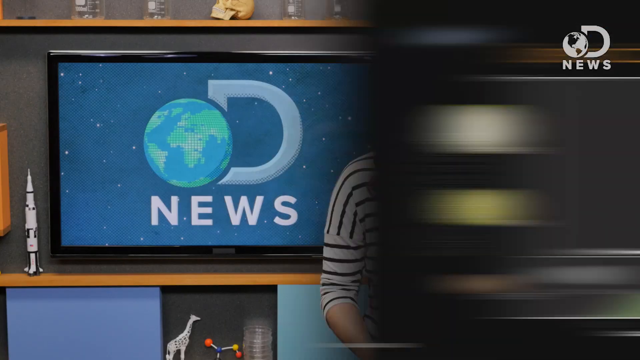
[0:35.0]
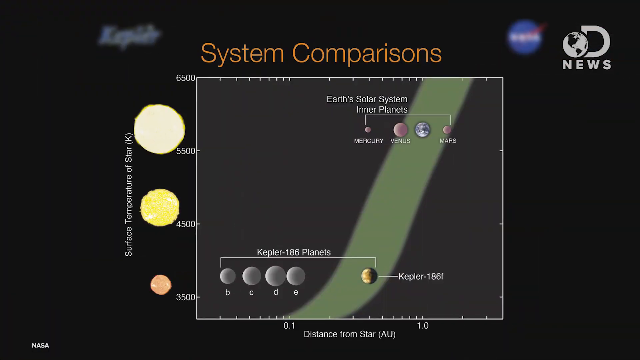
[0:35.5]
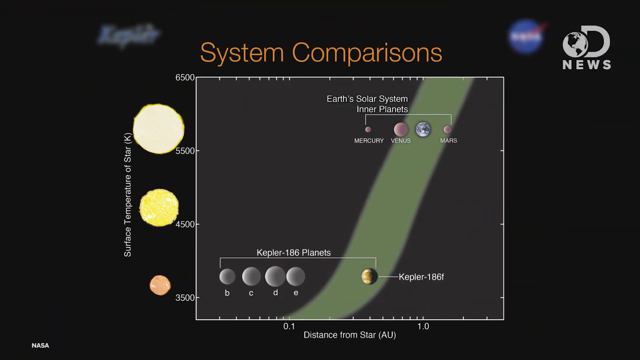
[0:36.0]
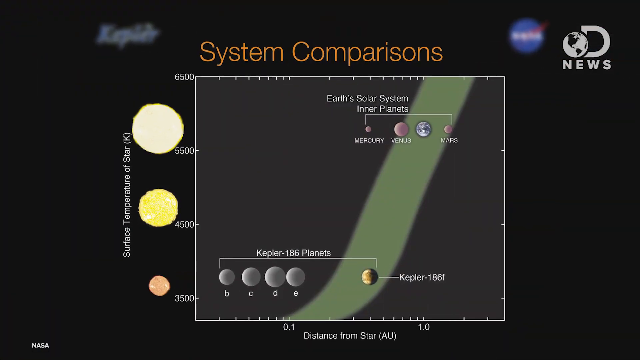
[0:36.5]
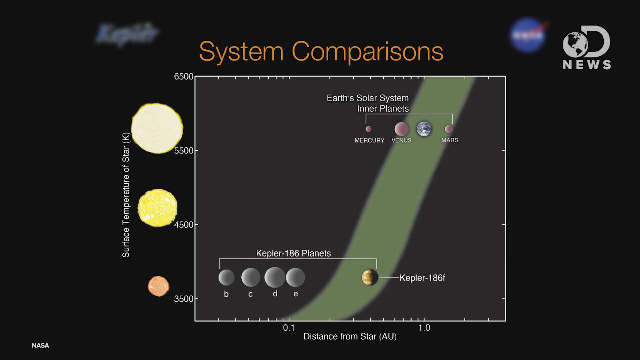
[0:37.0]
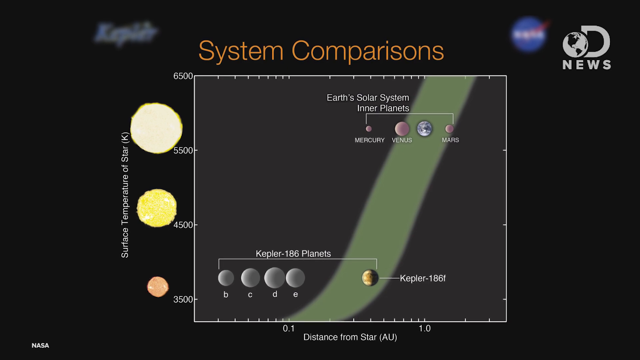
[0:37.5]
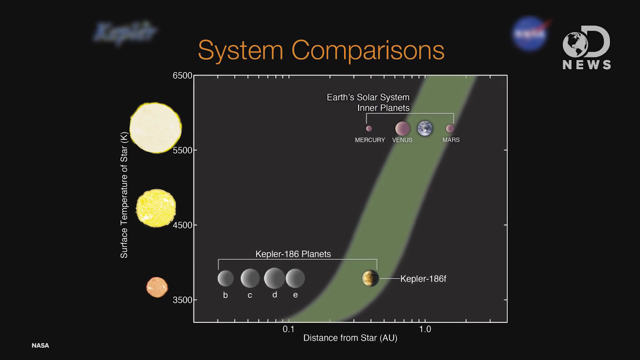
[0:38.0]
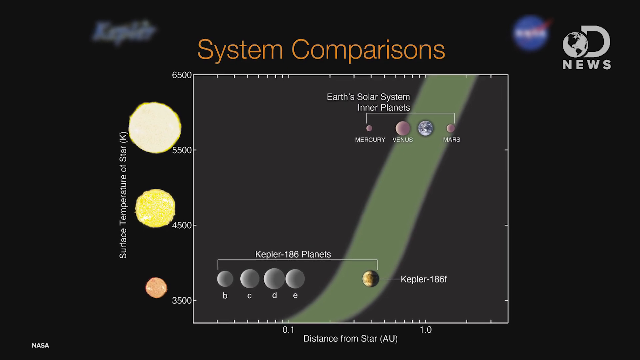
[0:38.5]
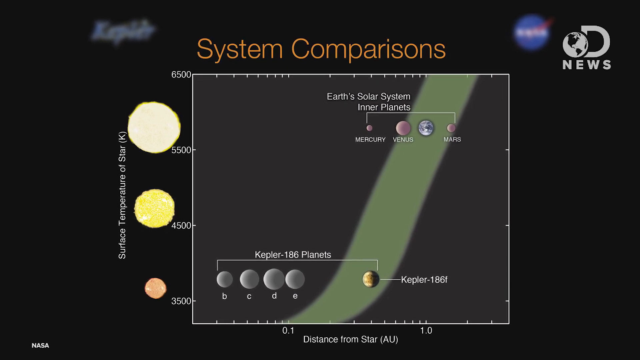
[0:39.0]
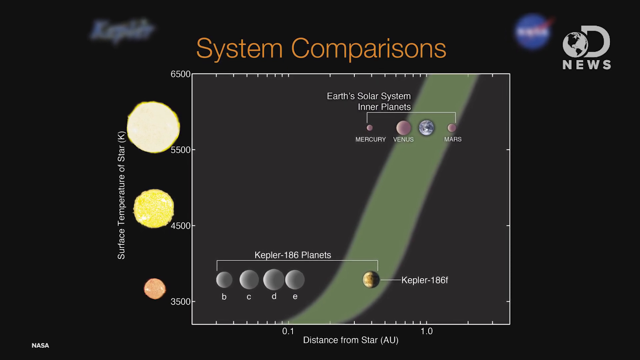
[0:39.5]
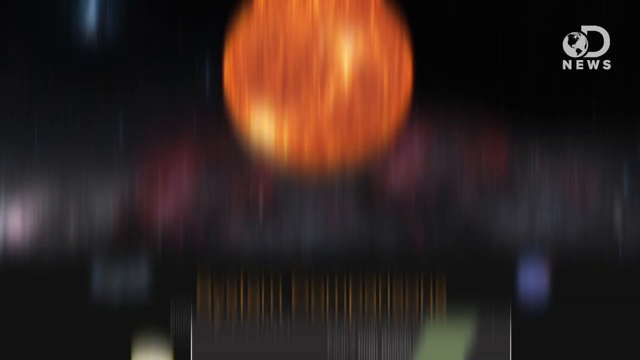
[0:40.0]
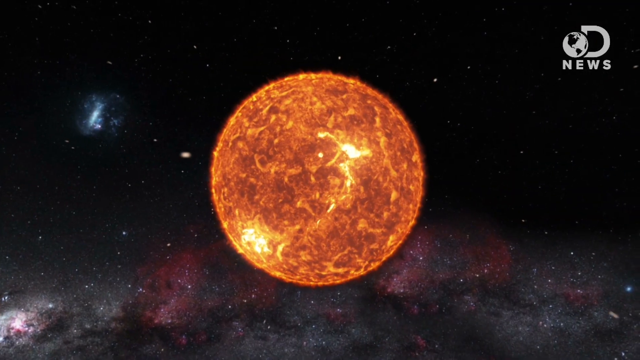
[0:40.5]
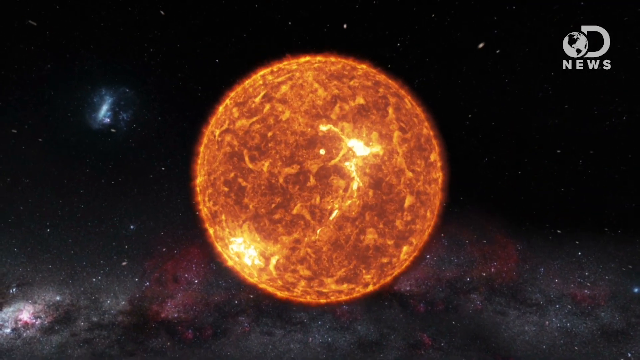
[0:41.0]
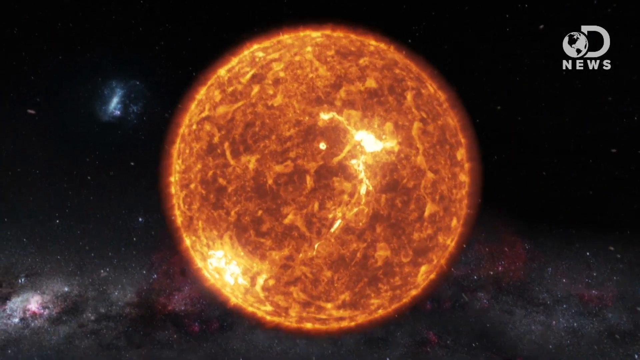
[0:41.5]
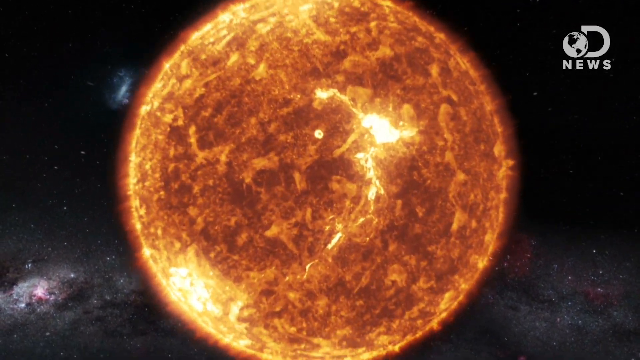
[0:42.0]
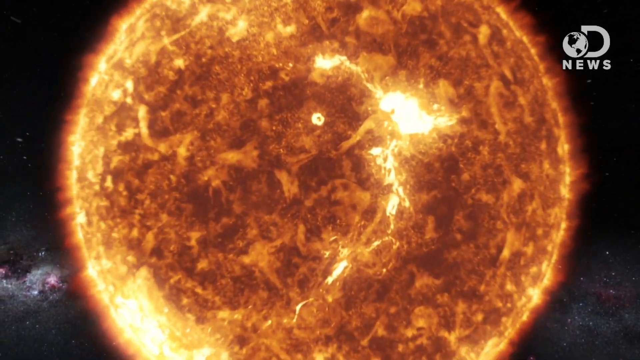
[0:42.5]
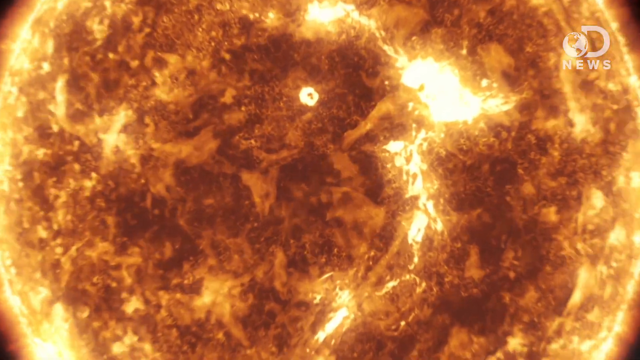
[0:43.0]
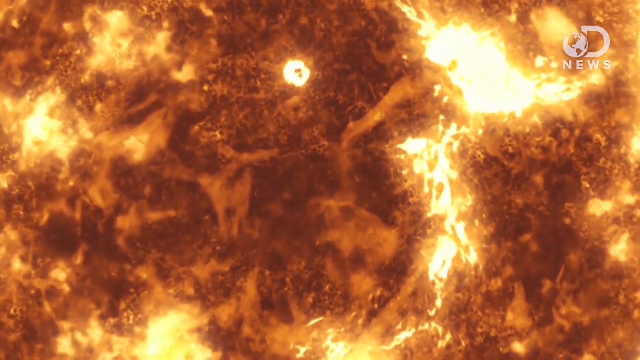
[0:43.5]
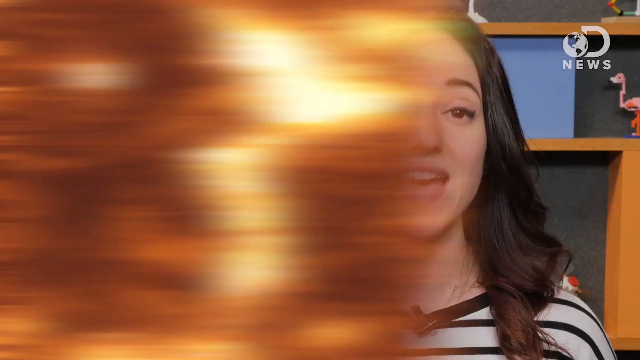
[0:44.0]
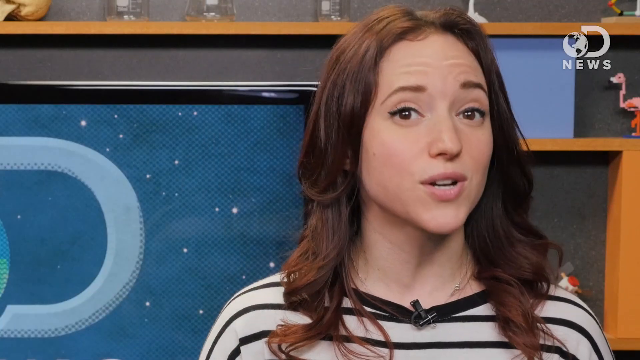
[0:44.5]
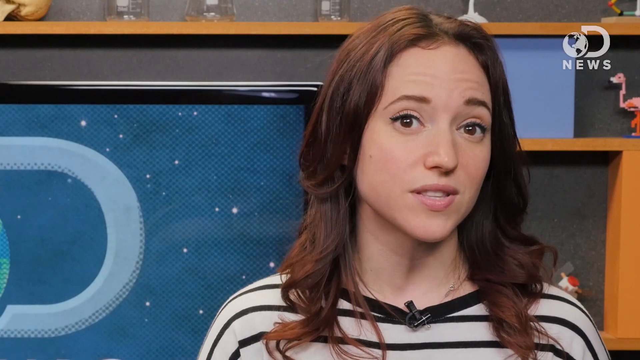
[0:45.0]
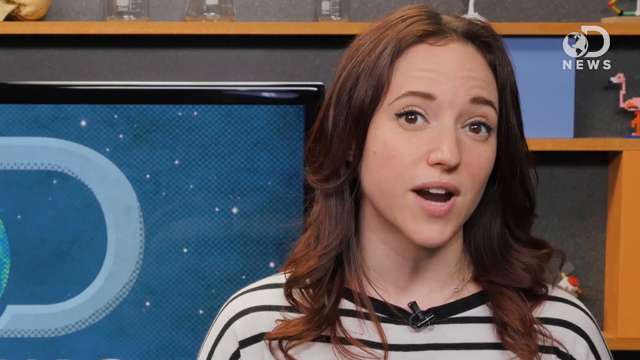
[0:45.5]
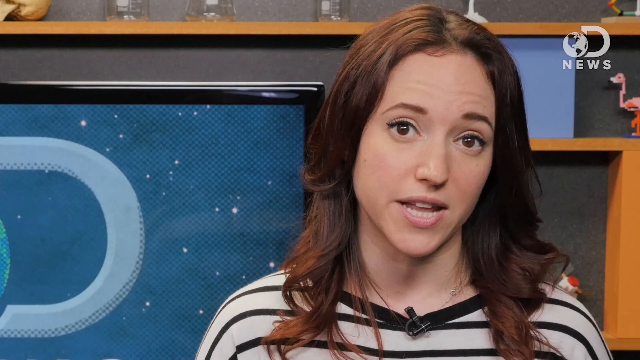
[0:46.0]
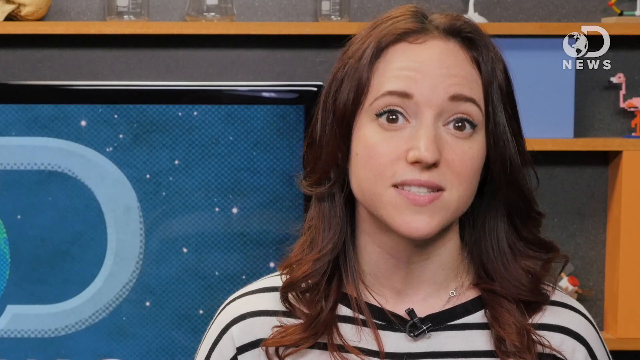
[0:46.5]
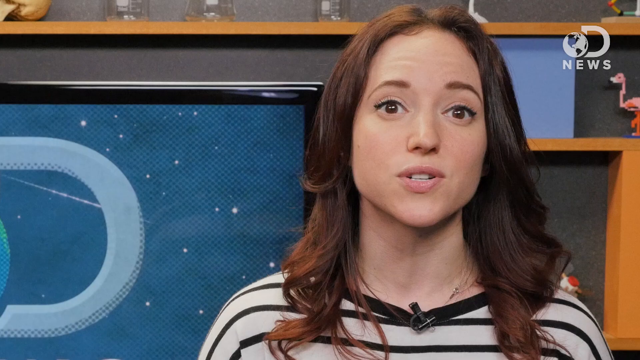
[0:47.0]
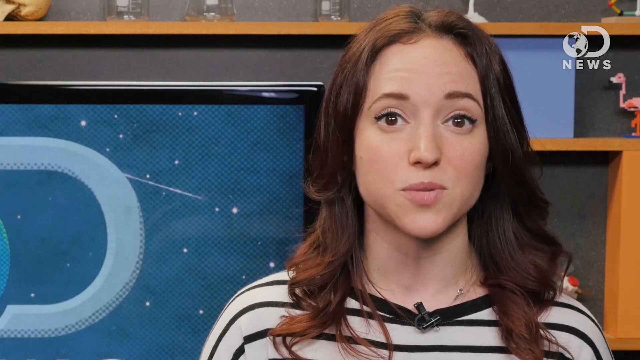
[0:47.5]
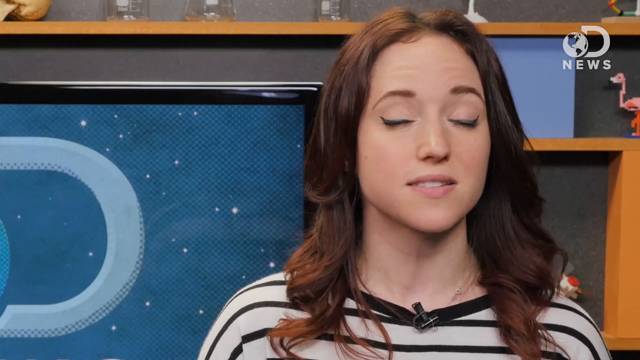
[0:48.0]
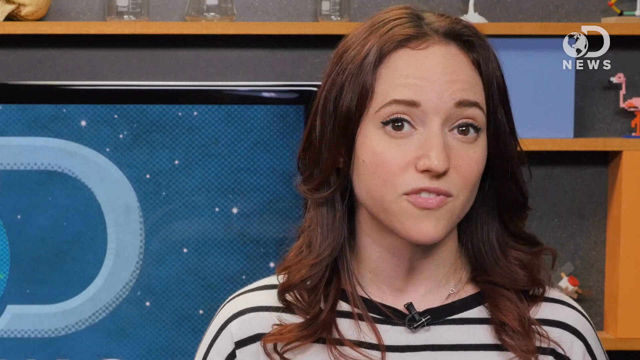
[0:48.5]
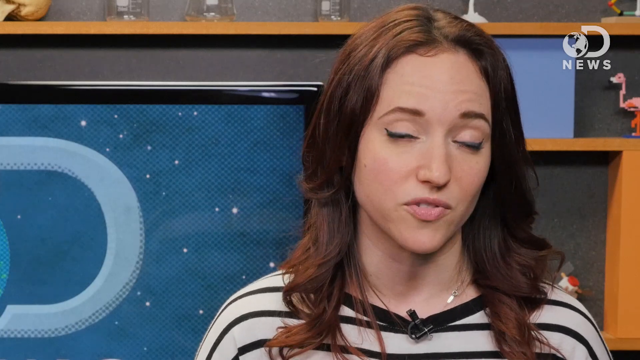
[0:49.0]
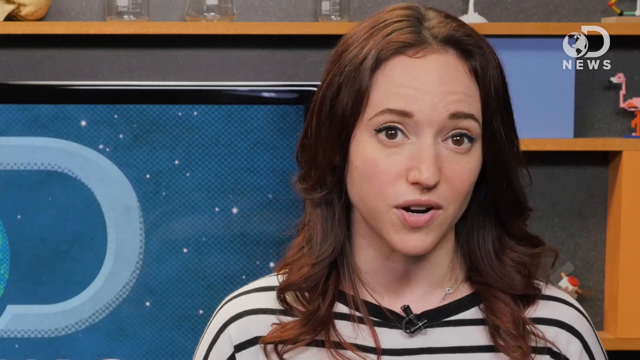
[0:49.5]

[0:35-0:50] A diagram compares two solar systems. It says "System Comparisons" at the top and shows the sun and planets from each system, comparing them in size. At the top of the diagram are the DNews logo and a slightly blurry NASA logo. The image then switches to a close-up of a sun that looks AI-generated; it is unclear whether it is the Sun of our solar system or of the Kepler system. The camera zooms into its center. It is surrounded by what looks like the Milky Way, with stars and gases, and it is dark beyond that. The scene then switches back to the news studio, where the presenter speaks in front of the unchanged background with bookshelves and a television screen showing the DNews logo.